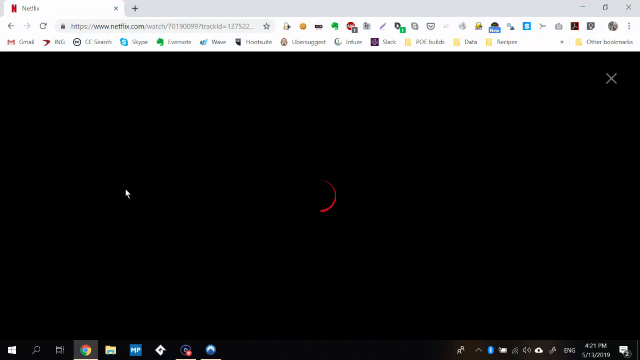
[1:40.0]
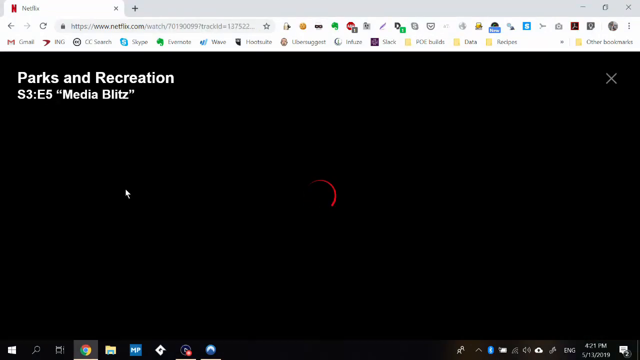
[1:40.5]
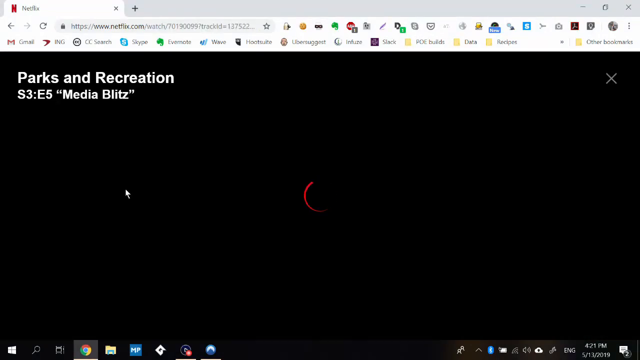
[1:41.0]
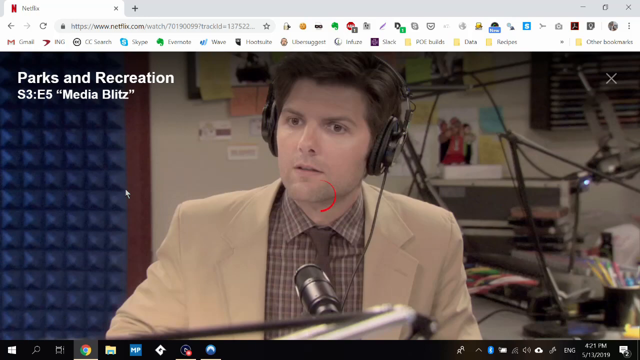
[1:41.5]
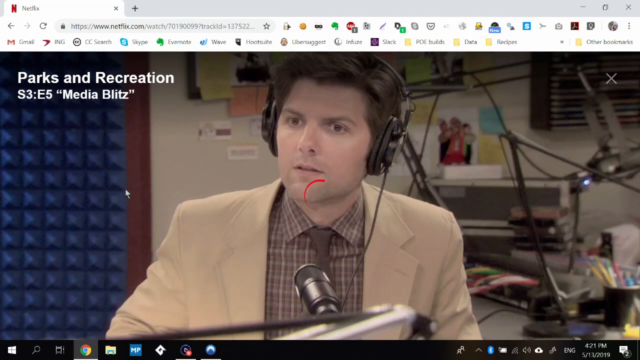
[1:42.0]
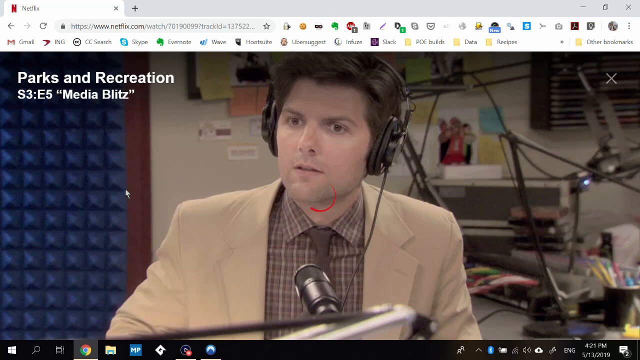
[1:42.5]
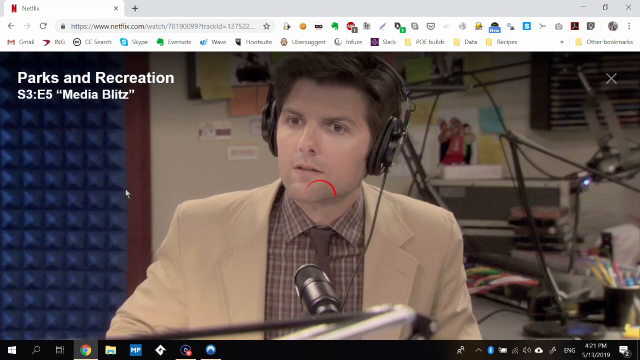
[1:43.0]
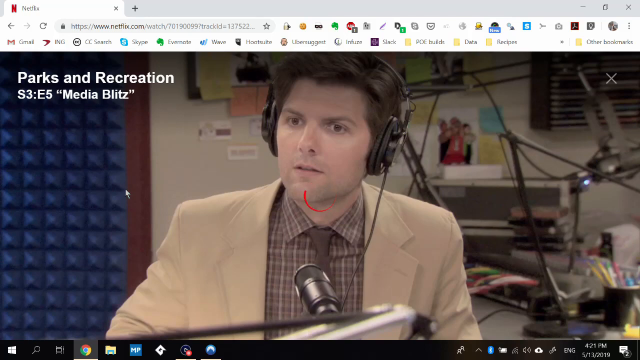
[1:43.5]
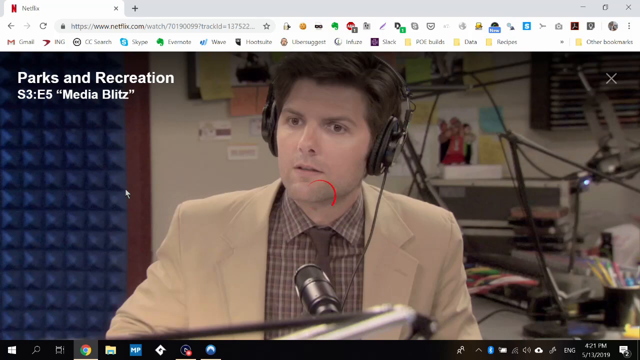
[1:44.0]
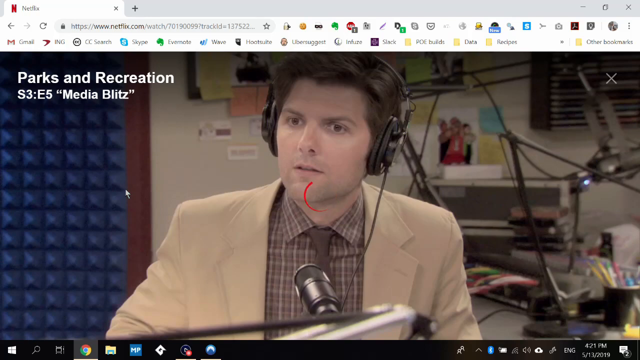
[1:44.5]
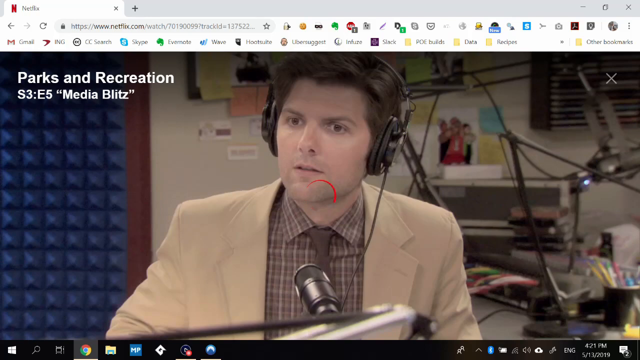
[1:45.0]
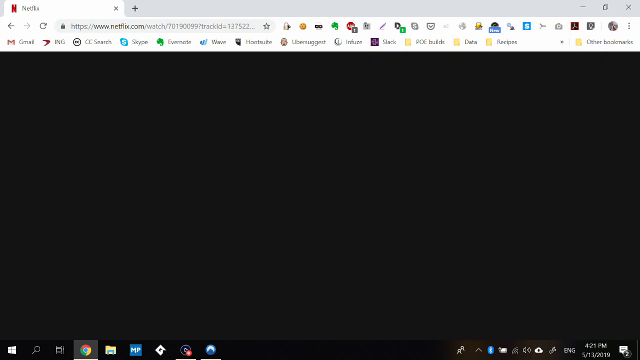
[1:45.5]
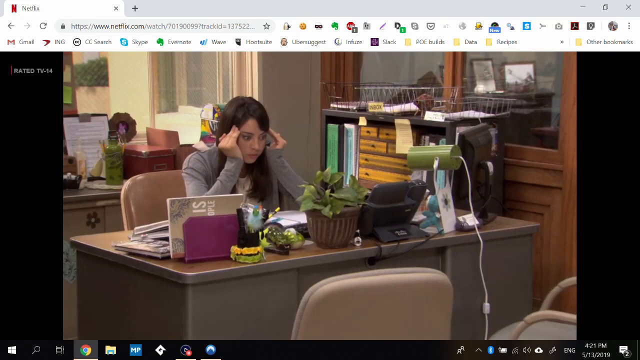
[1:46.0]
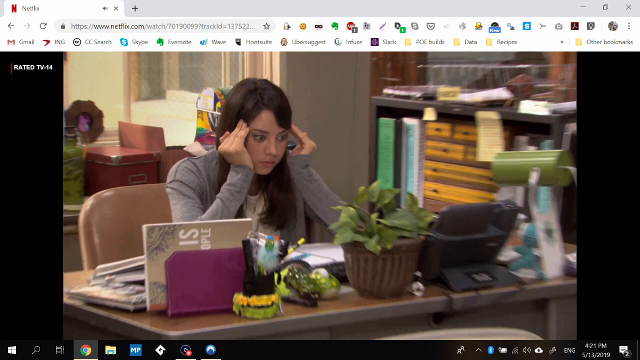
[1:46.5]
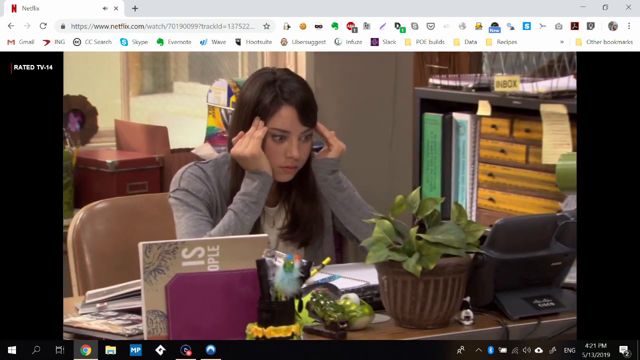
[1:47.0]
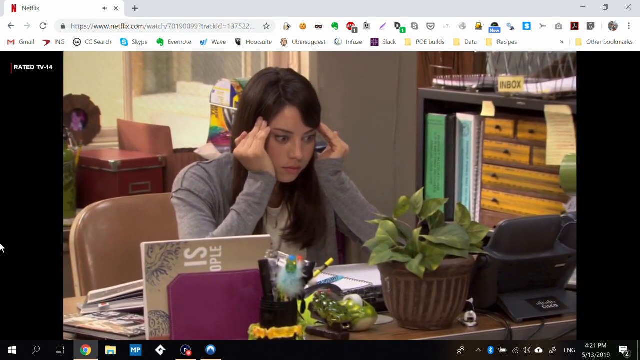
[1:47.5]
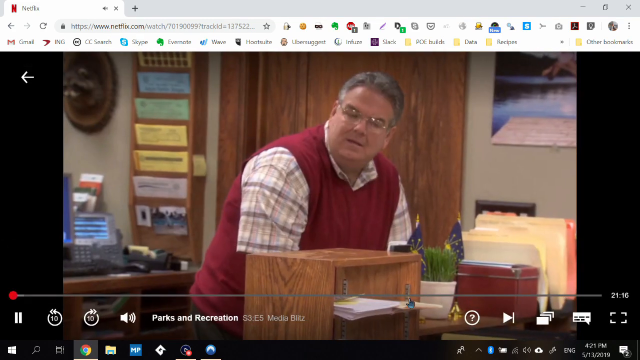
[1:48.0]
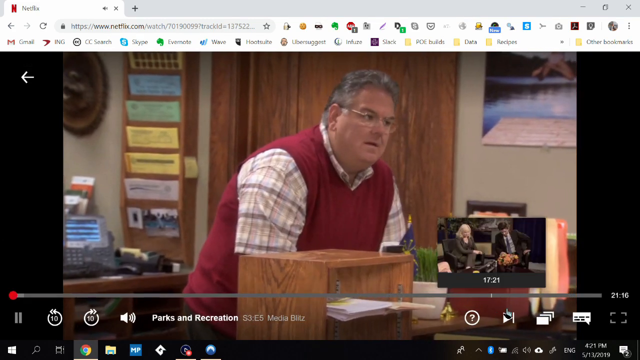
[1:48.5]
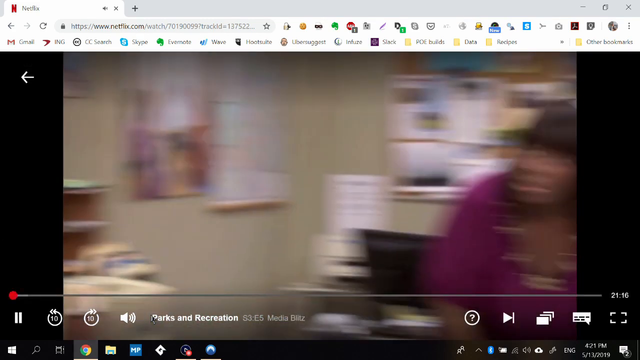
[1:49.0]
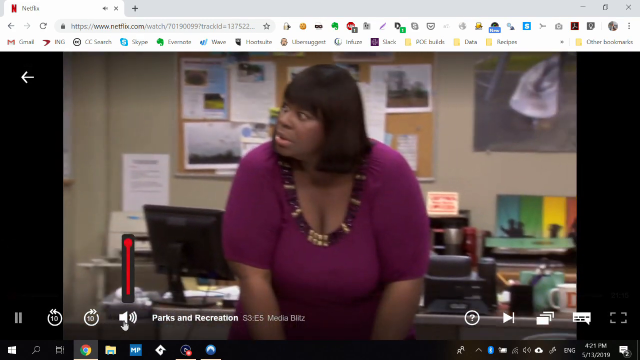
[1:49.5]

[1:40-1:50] A movie starts playing. It looks like a comedy with funny people, and it plays very fast, like fast-forward, making it hard to follow what is happening.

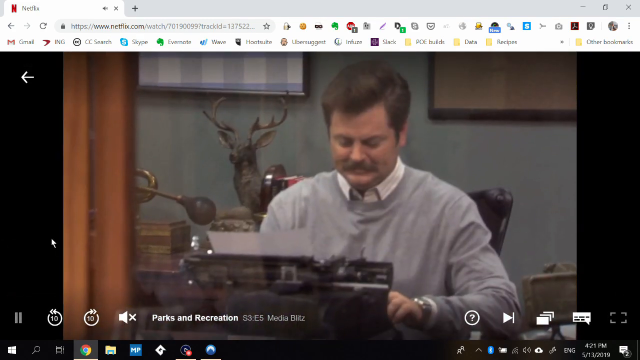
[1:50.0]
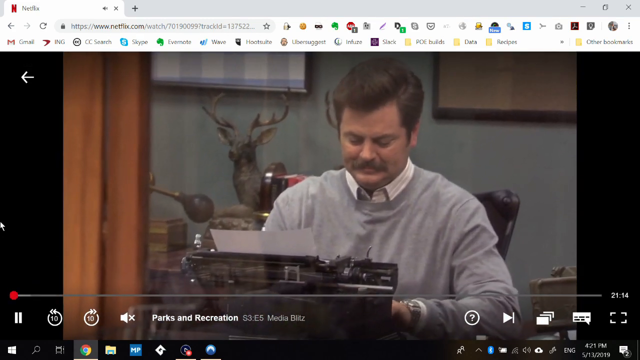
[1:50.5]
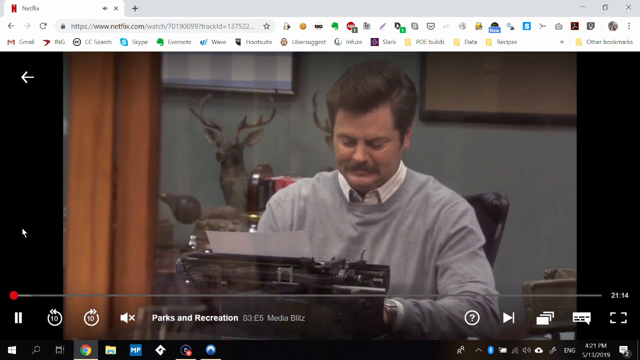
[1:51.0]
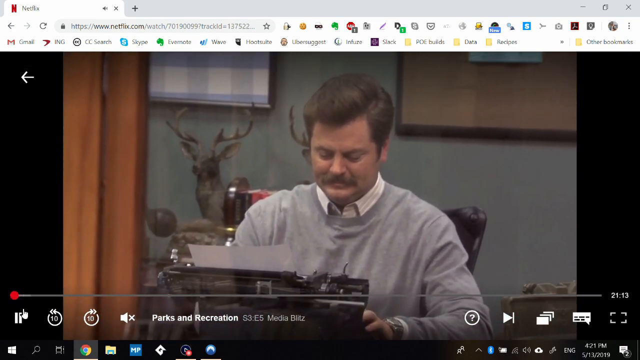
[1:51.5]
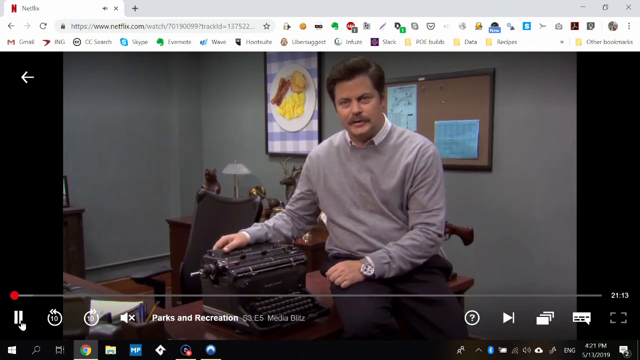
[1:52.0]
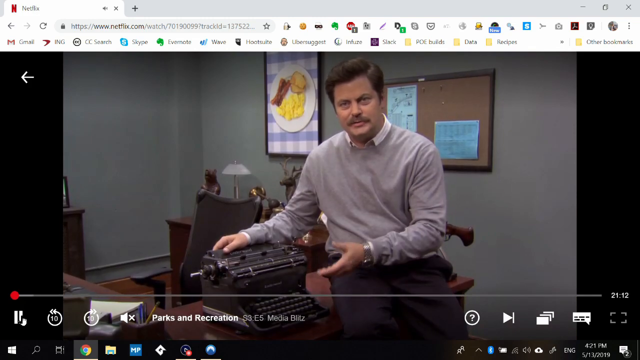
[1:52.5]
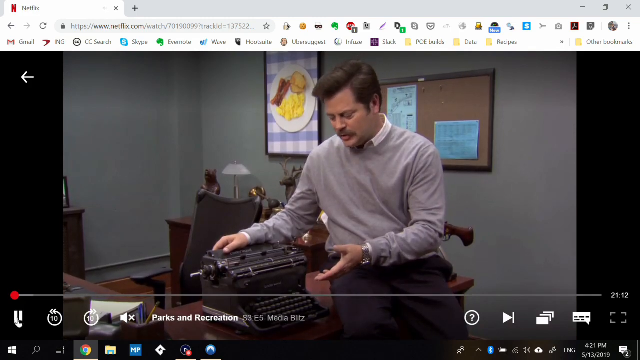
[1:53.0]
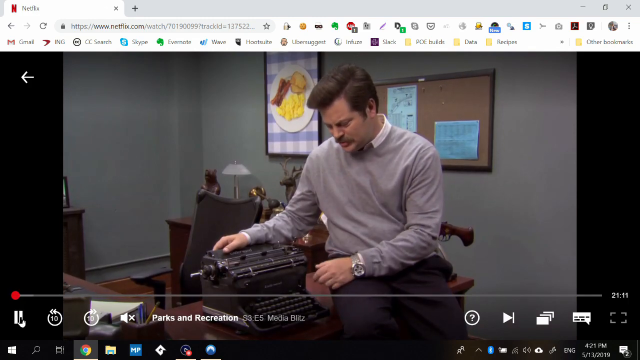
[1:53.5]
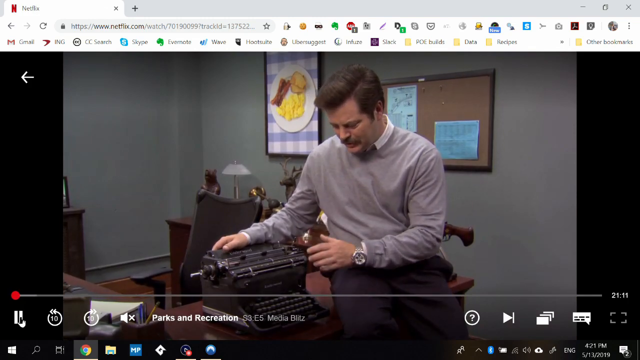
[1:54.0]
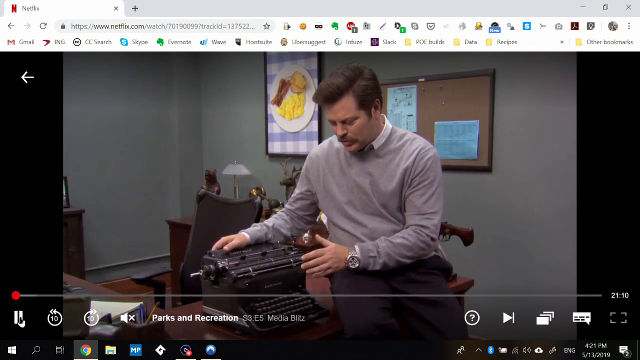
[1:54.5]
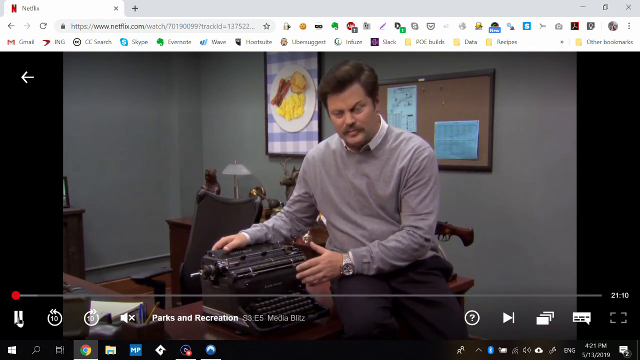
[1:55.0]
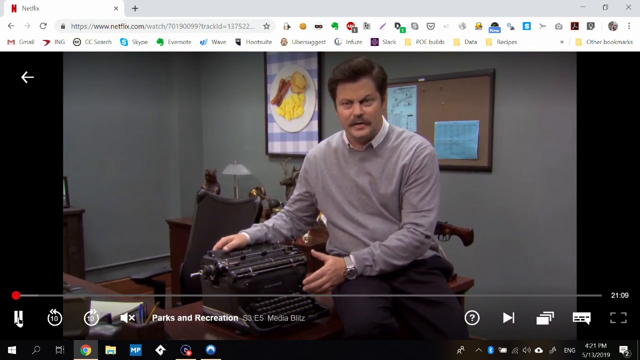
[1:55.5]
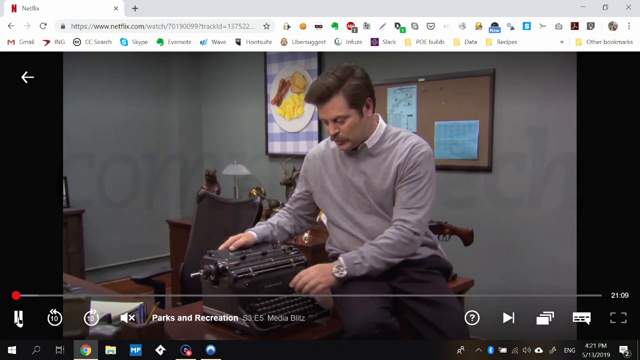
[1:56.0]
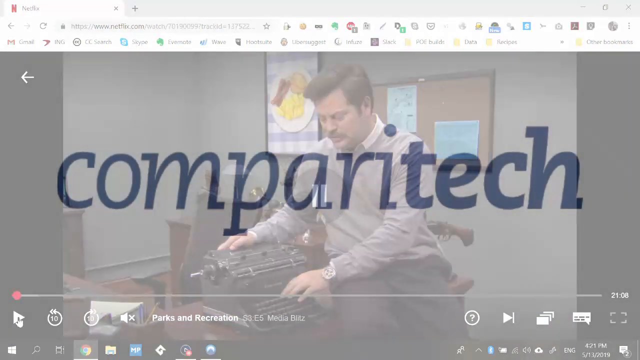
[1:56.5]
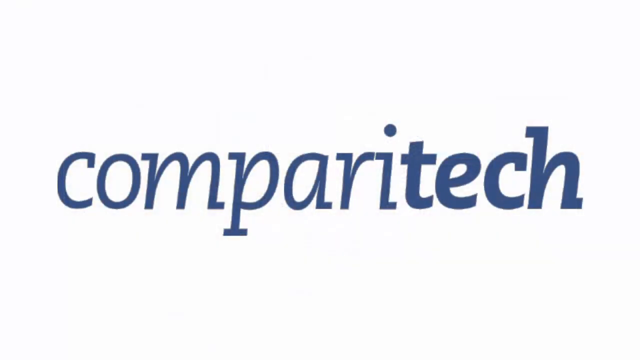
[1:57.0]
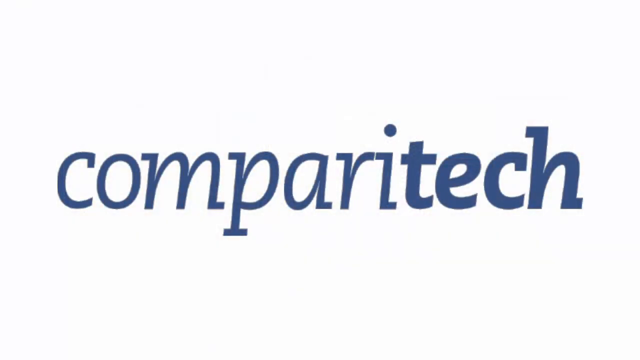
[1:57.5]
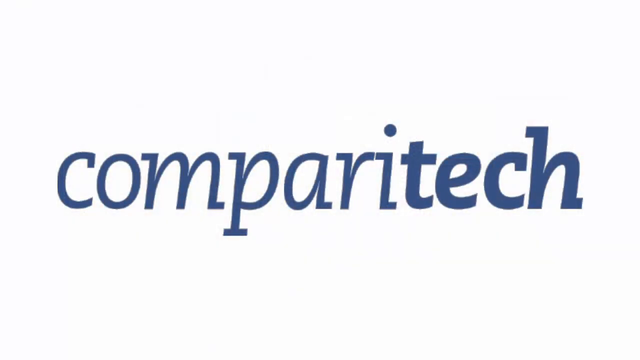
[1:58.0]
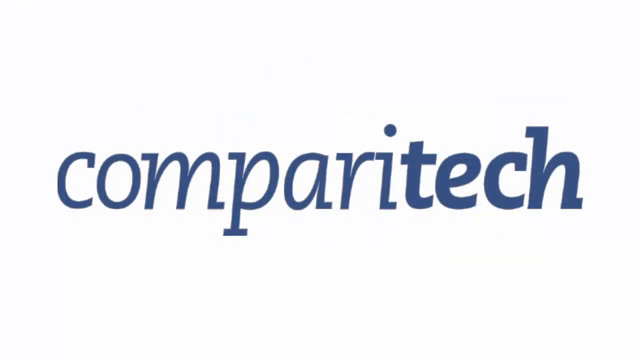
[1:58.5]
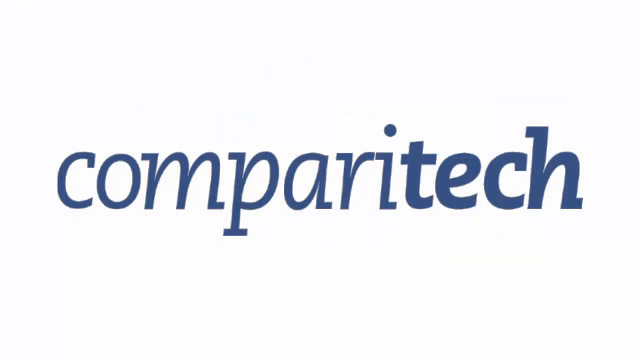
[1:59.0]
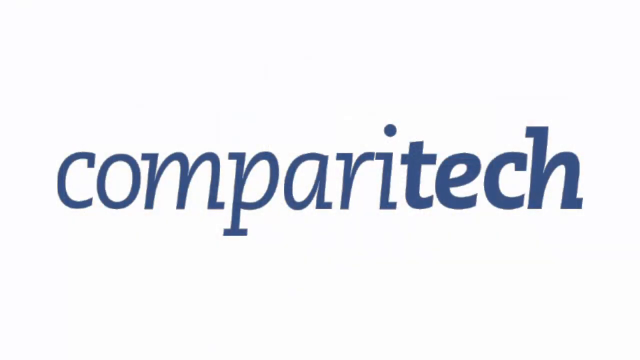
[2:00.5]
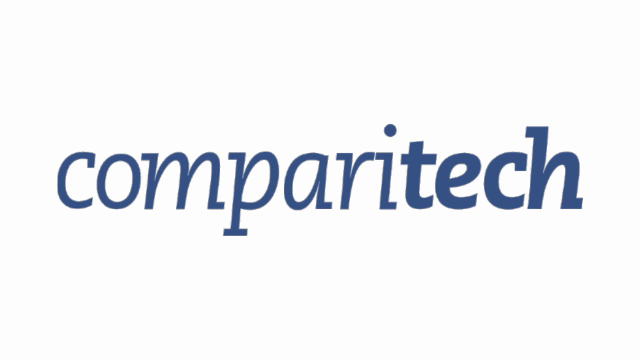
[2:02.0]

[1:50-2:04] The movie continues playing until large blue text reading "Comparise Tech" appears on a plain white background, with no other words on the screen.